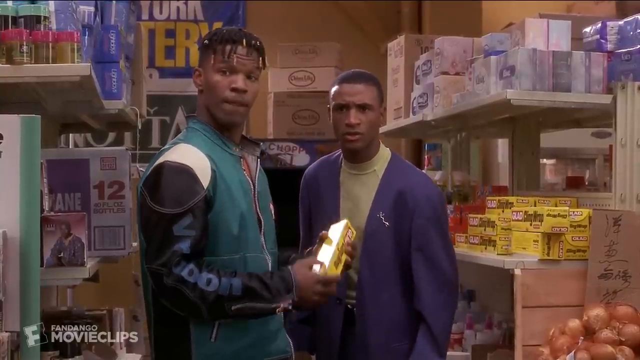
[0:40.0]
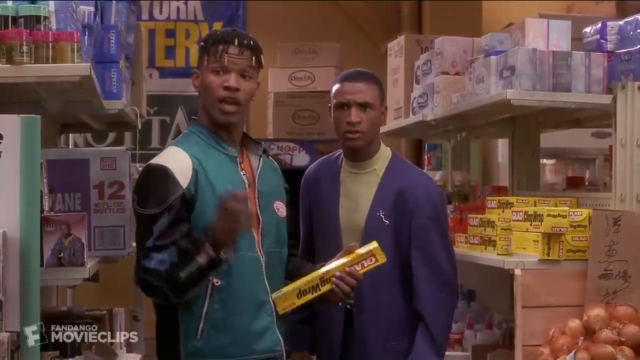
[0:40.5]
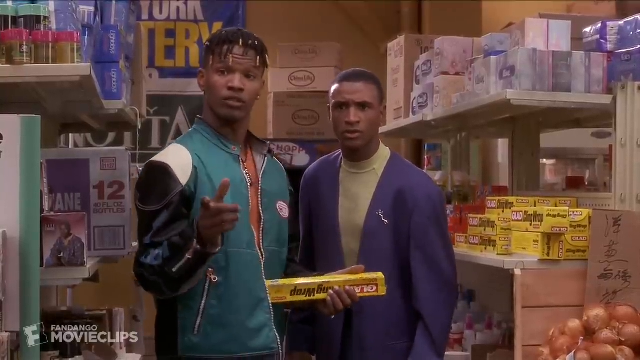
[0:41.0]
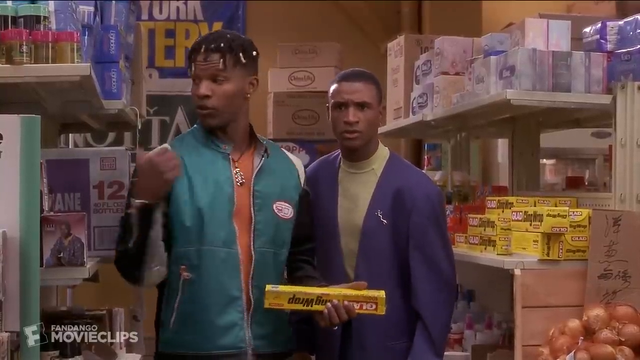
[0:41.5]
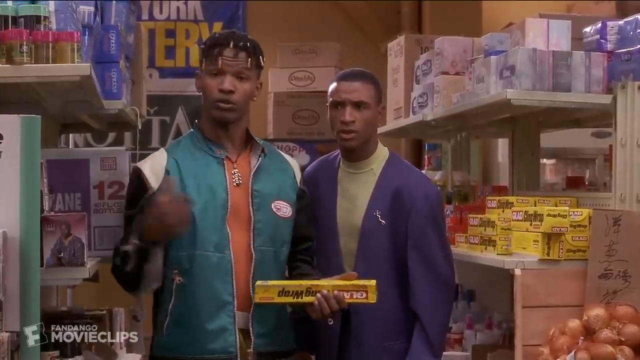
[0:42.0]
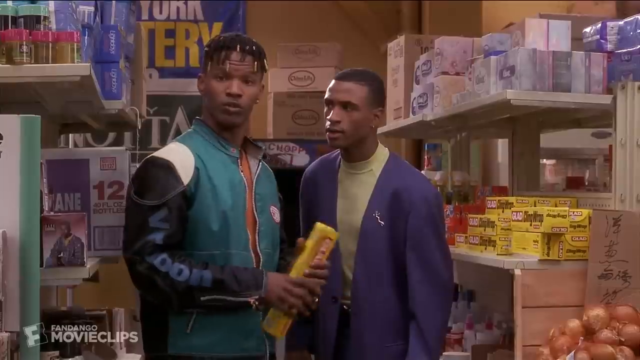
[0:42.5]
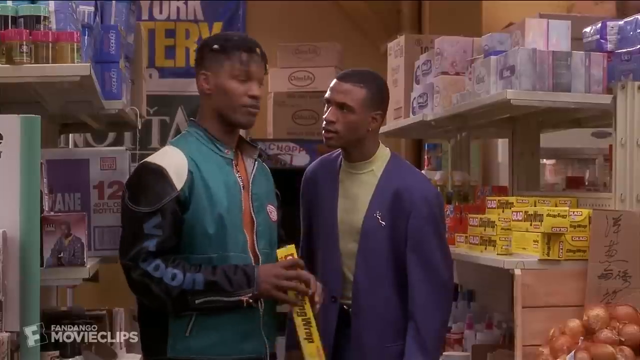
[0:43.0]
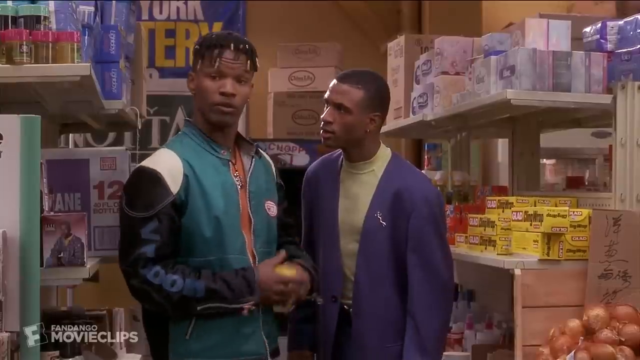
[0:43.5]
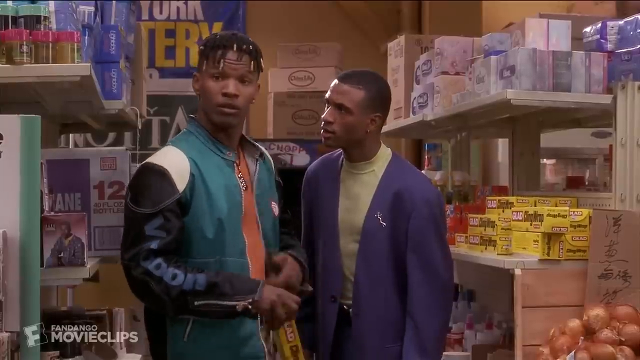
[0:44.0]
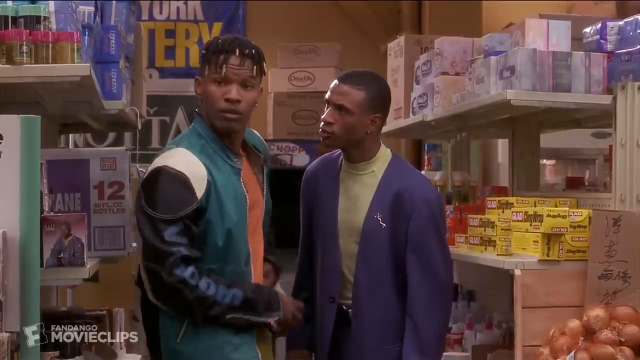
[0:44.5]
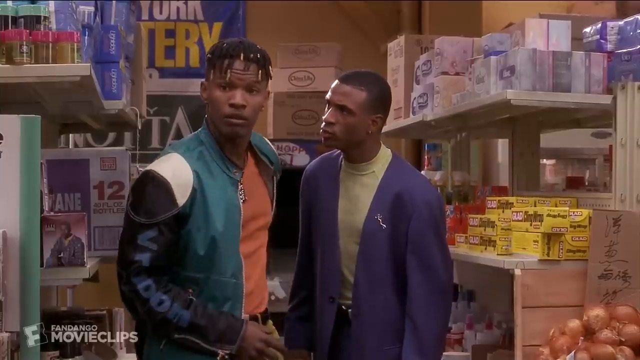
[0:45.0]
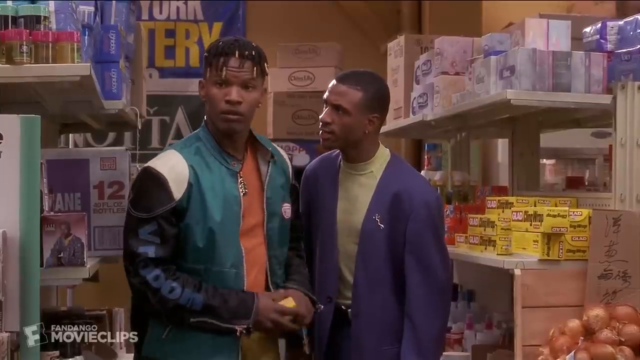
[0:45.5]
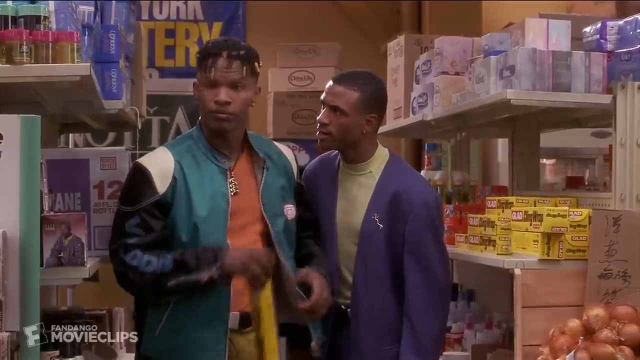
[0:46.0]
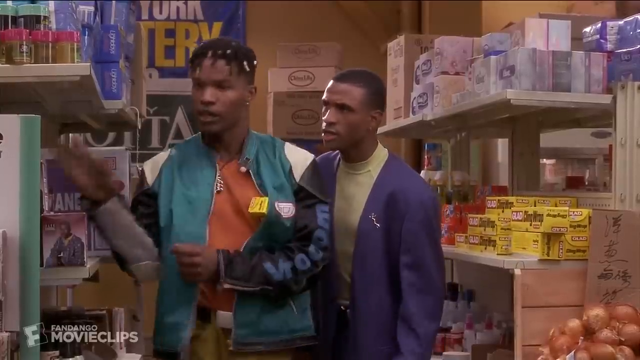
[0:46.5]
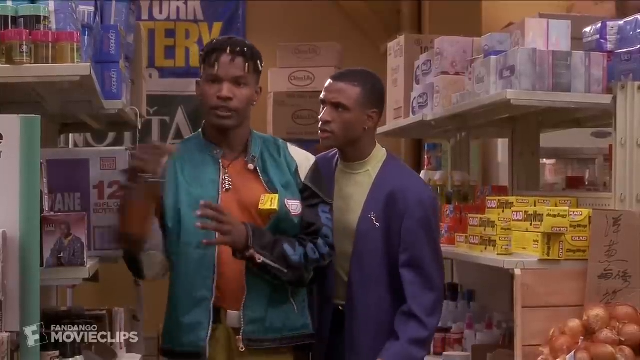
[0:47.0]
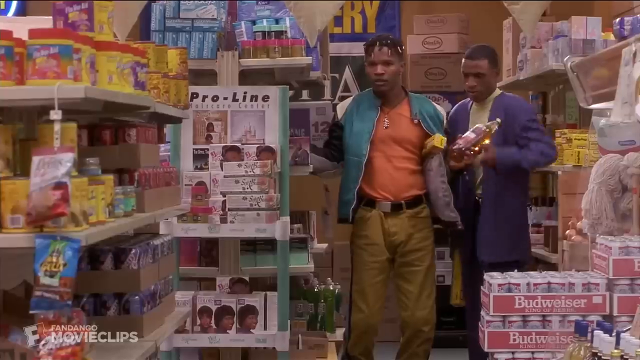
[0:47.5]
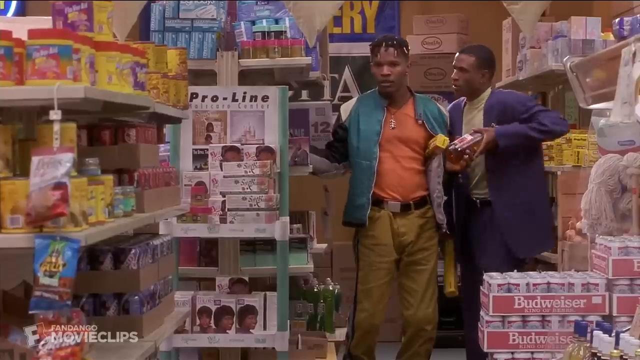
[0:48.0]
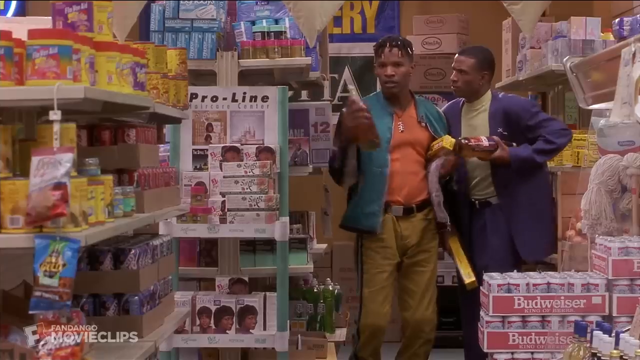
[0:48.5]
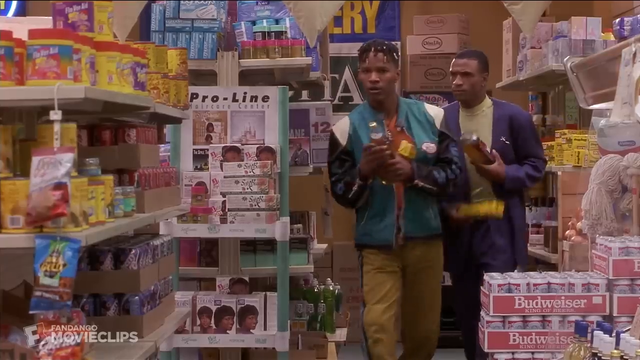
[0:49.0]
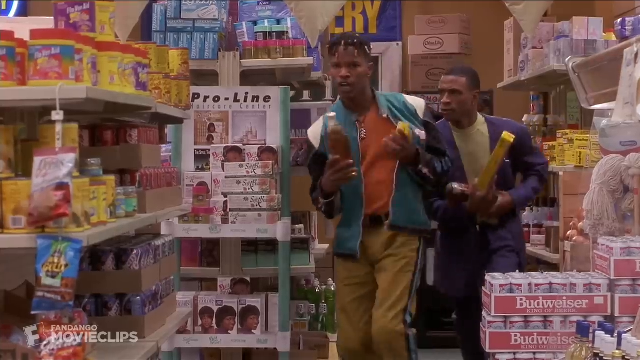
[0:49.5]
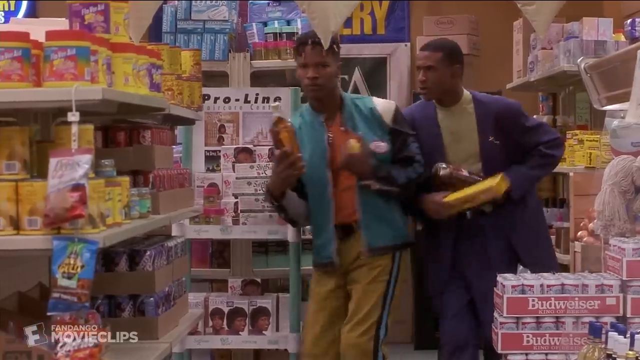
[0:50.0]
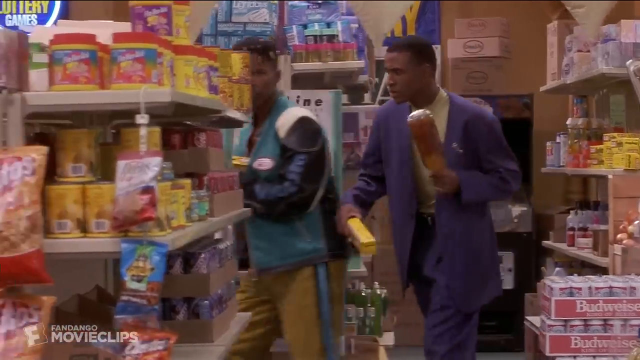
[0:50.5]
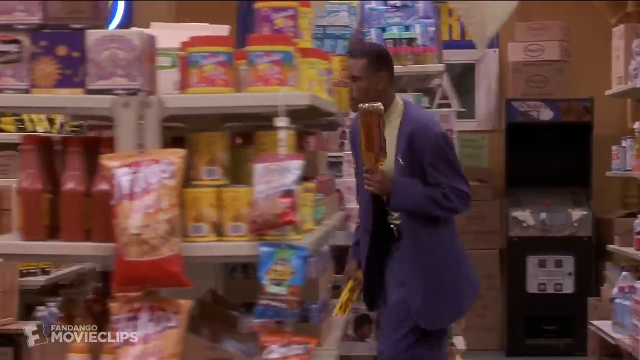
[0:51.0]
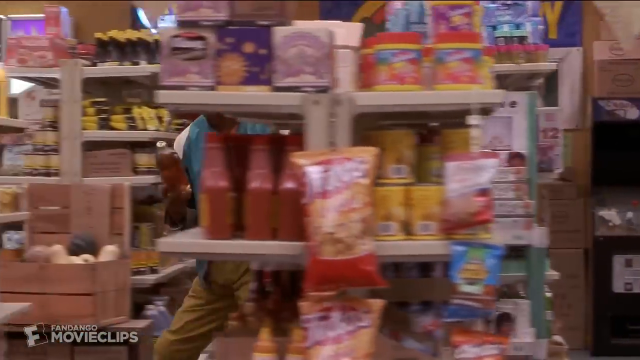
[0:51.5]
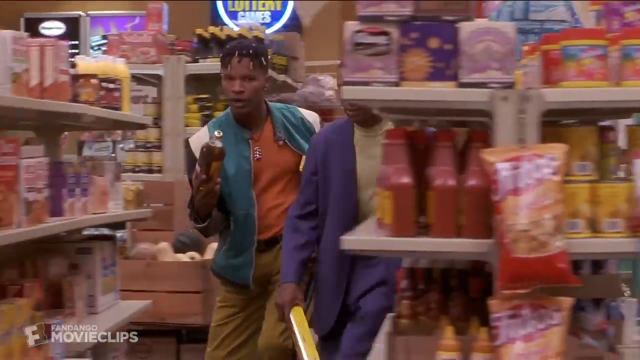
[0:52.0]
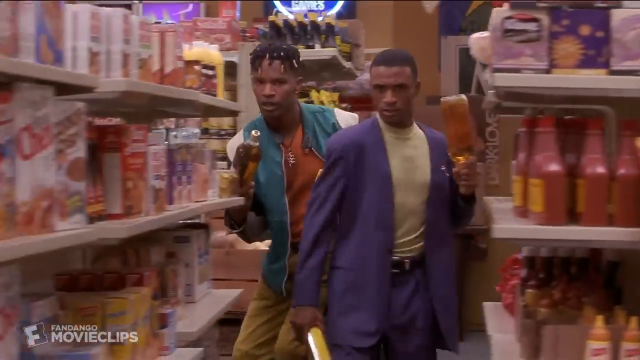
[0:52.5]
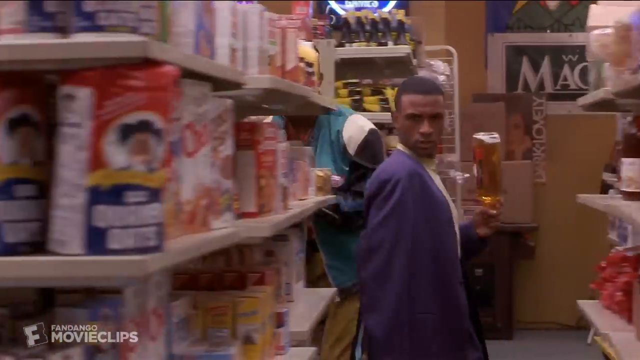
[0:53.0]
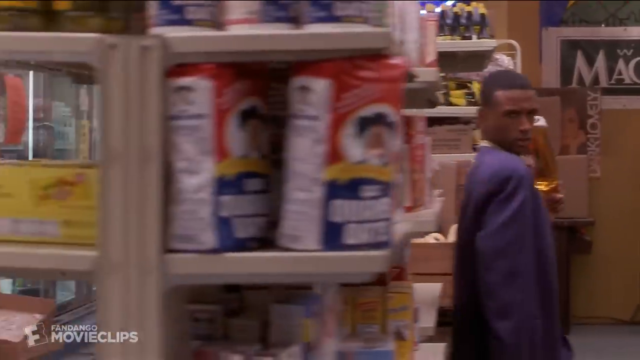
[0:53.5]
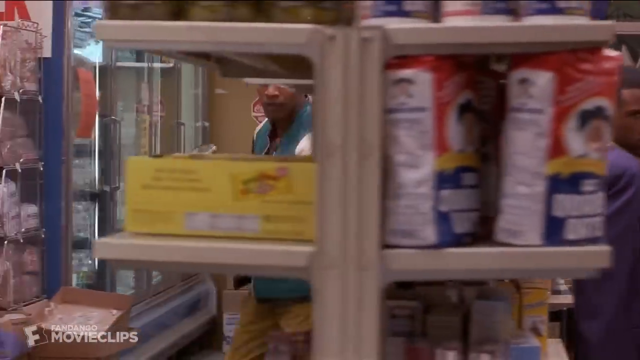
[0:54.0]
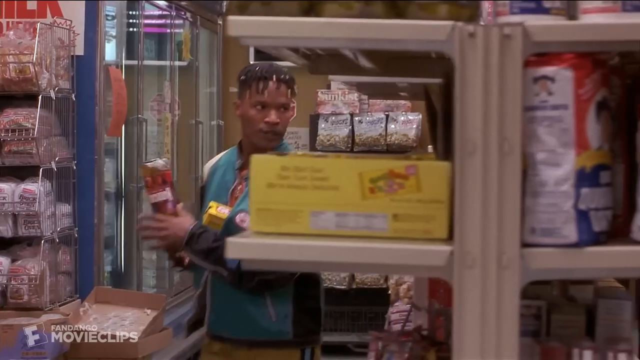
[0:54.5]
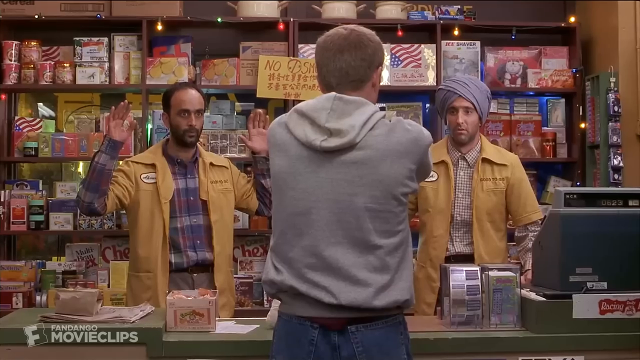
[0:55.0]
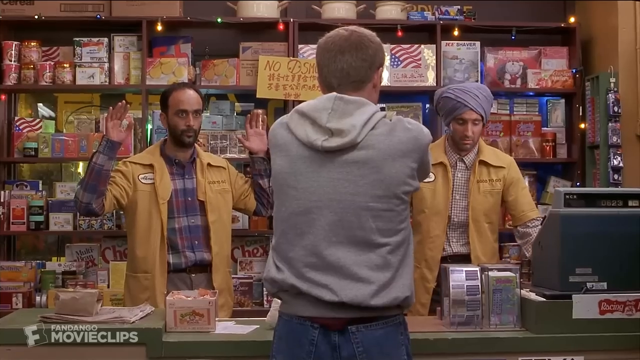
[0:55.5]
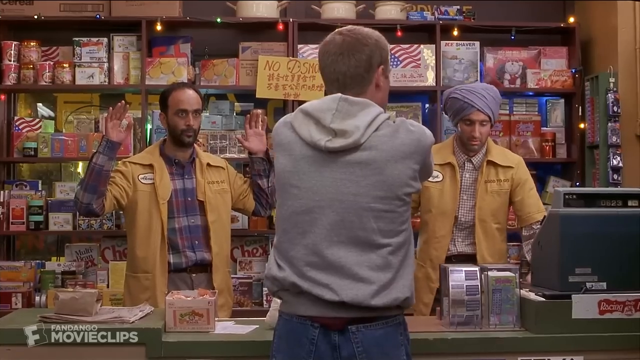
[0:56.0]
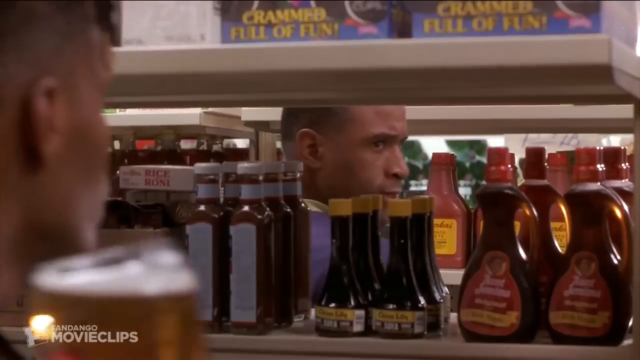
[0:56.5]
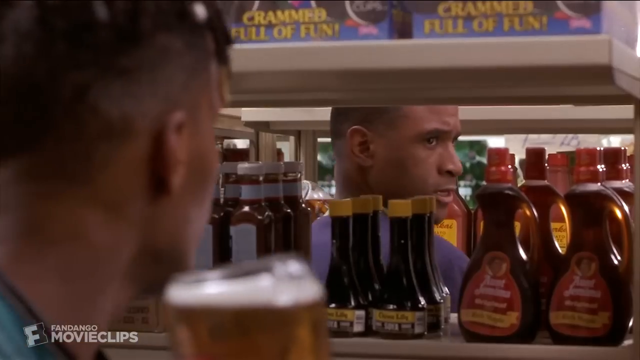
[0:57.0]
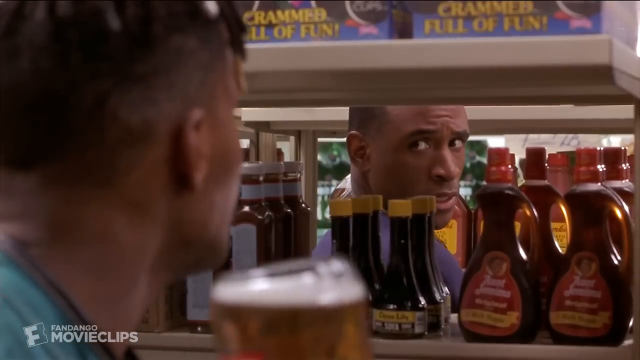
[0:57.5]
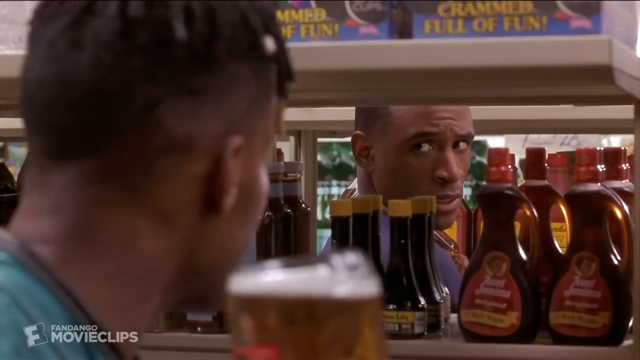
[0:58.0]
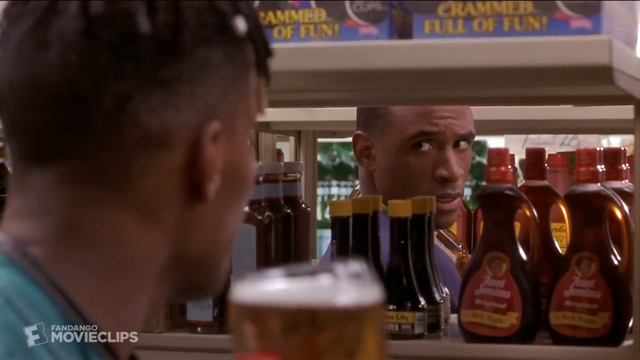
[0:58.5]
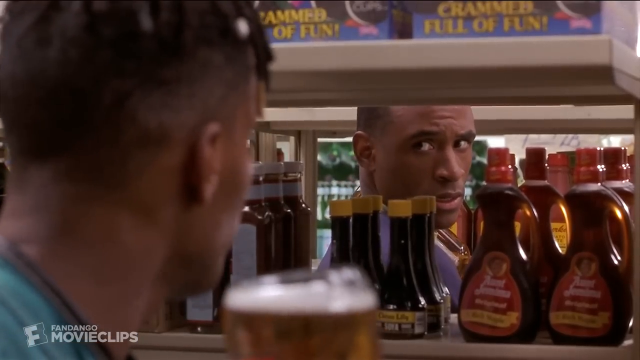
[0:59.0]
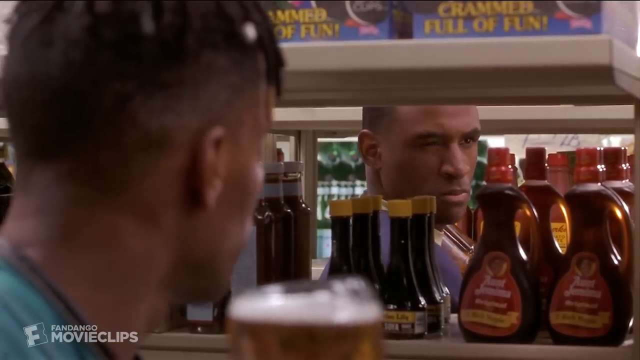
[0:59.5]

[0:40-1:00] The two men seem to be trying to buy something but appear to be looking at something else that is happening. They hold two bottles as if about to hit someone, apparently having seen that someone is trying to rob the store and trying to save the owners.